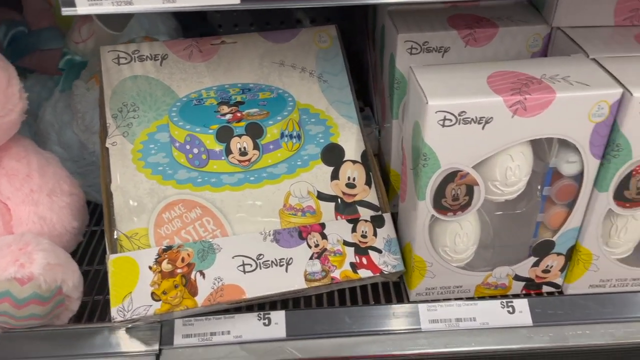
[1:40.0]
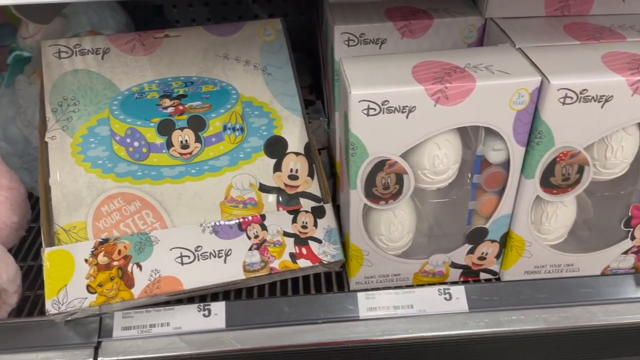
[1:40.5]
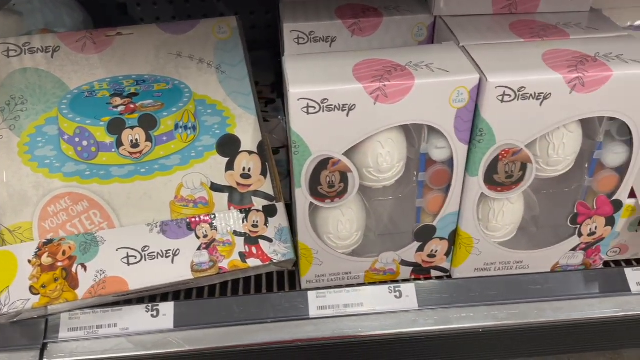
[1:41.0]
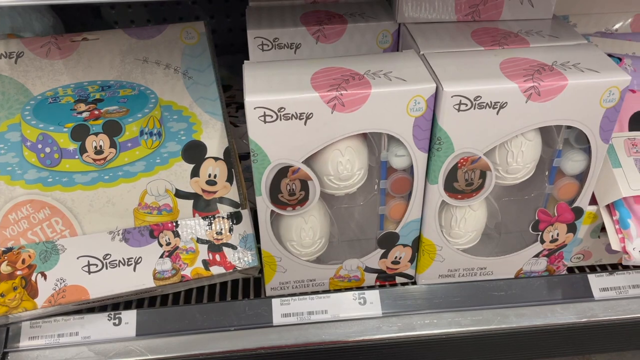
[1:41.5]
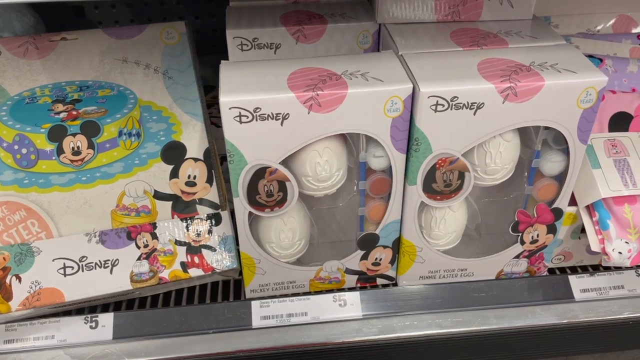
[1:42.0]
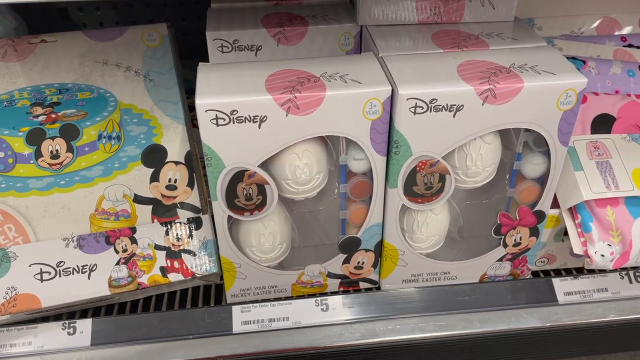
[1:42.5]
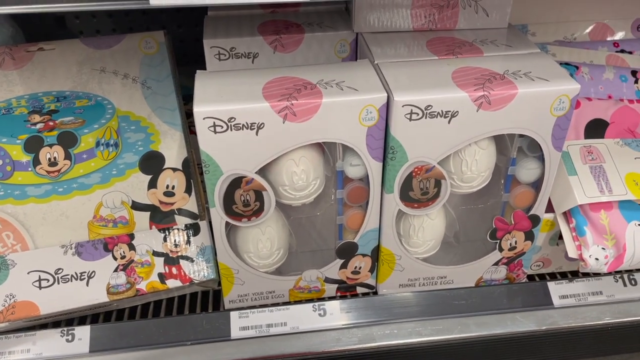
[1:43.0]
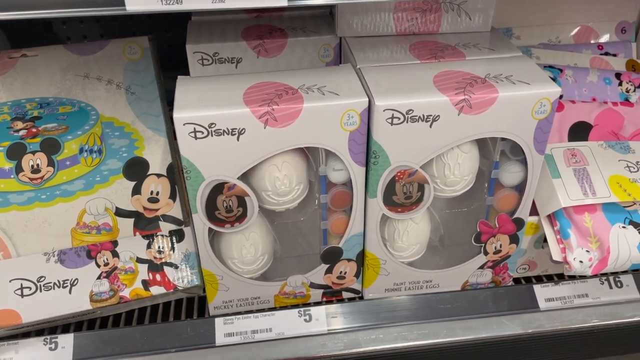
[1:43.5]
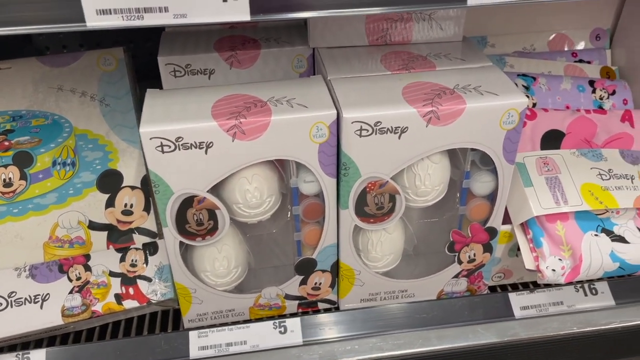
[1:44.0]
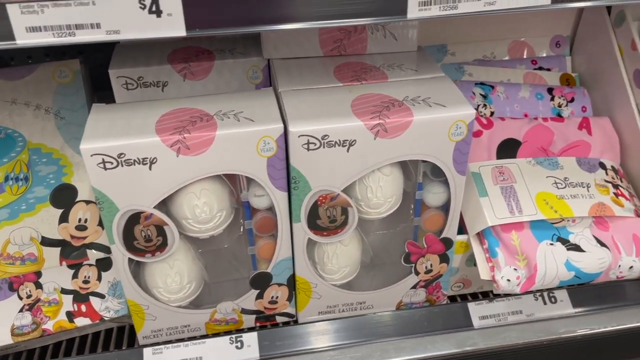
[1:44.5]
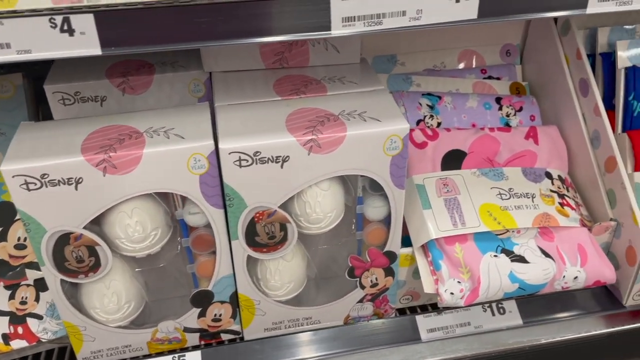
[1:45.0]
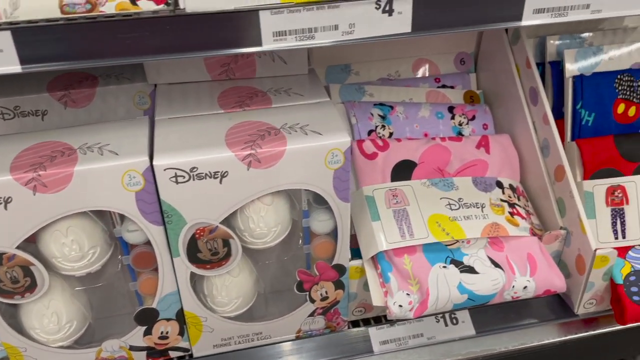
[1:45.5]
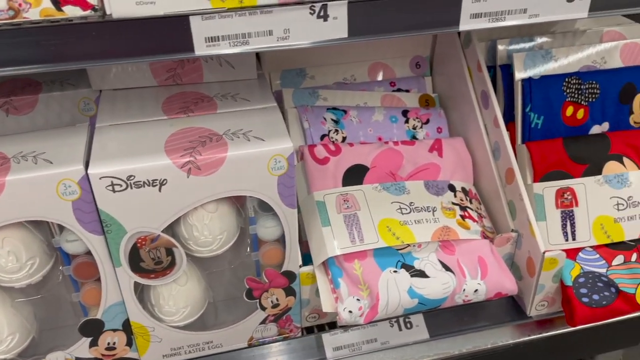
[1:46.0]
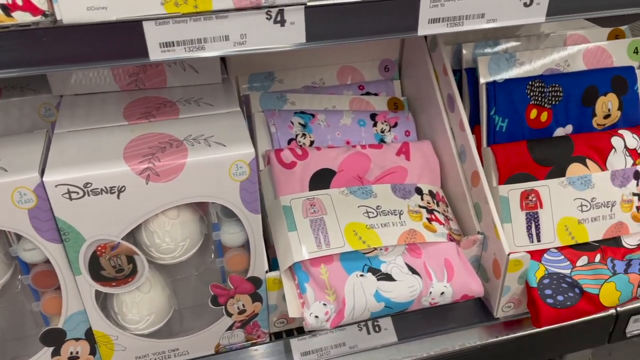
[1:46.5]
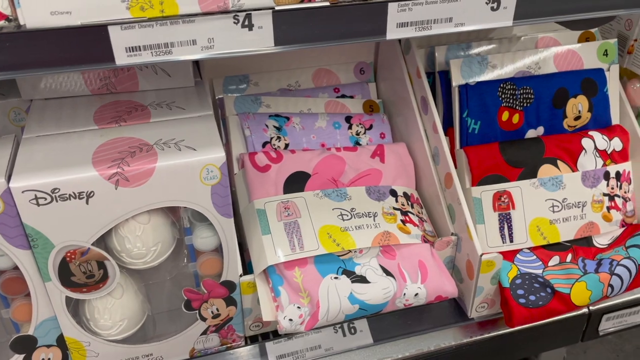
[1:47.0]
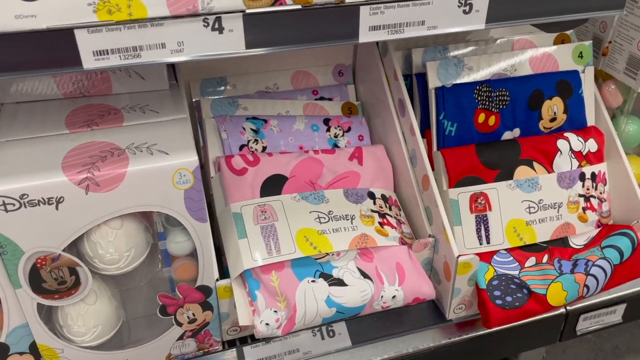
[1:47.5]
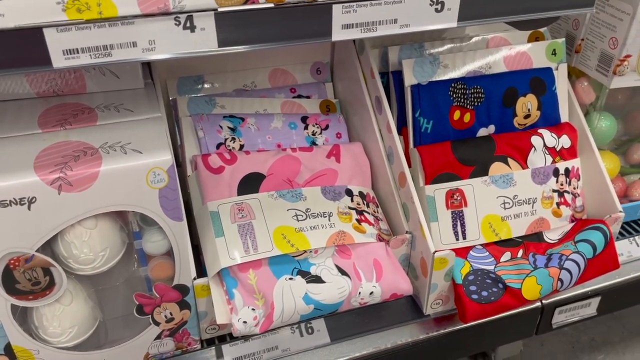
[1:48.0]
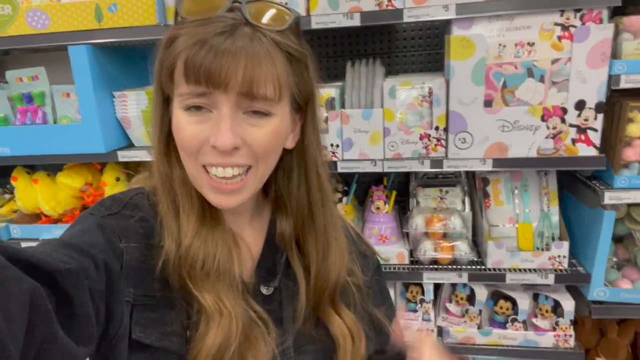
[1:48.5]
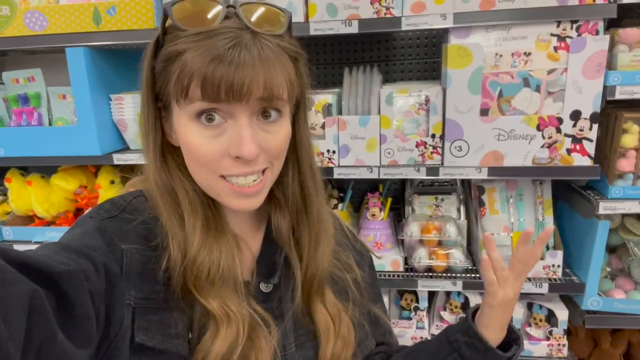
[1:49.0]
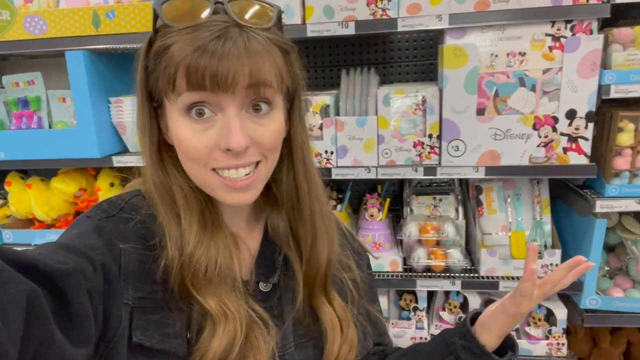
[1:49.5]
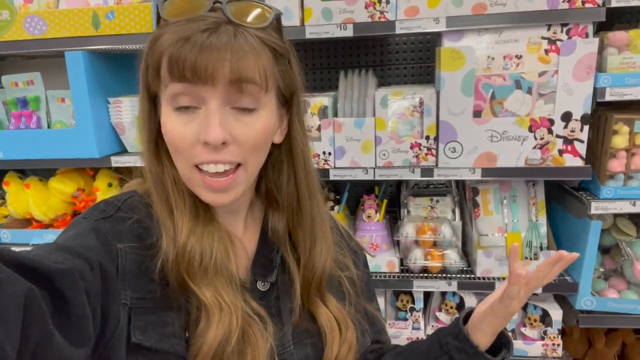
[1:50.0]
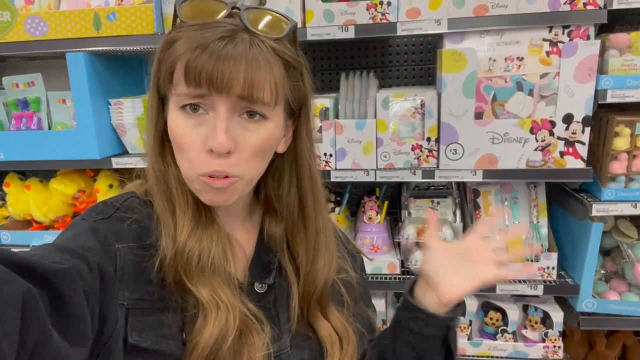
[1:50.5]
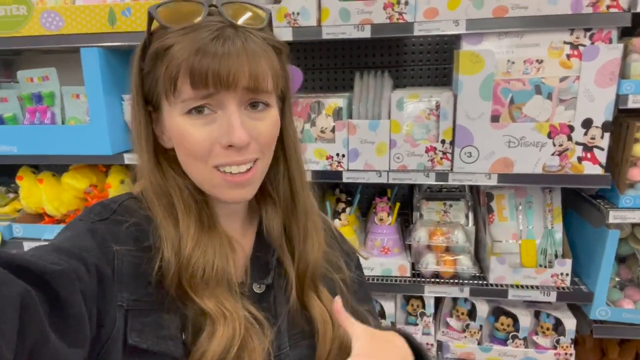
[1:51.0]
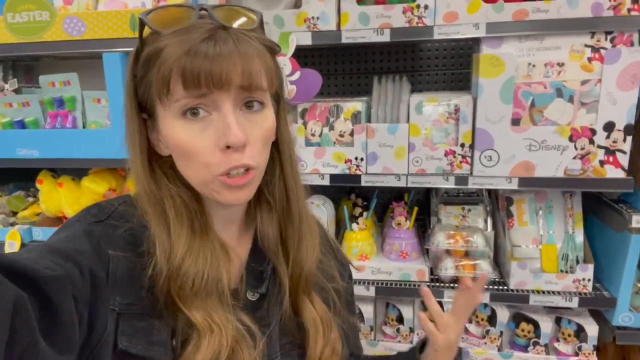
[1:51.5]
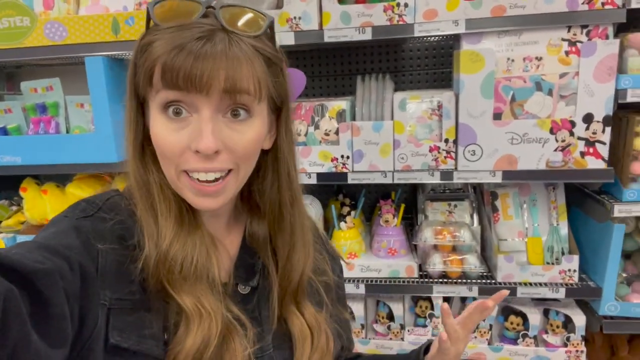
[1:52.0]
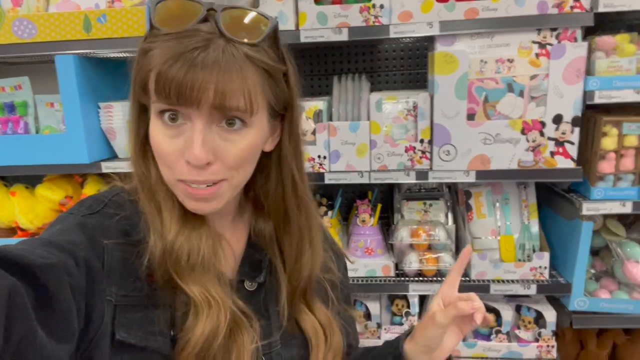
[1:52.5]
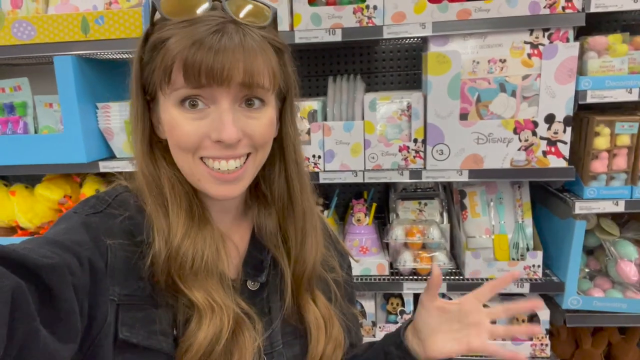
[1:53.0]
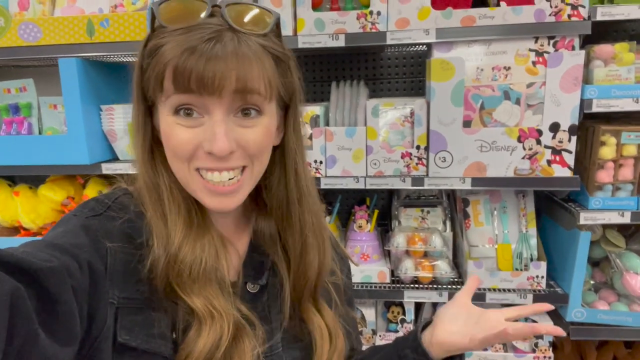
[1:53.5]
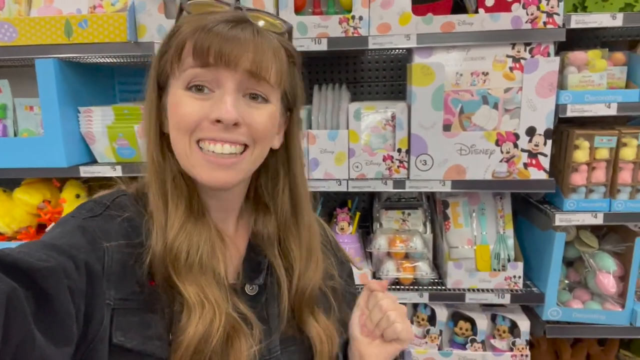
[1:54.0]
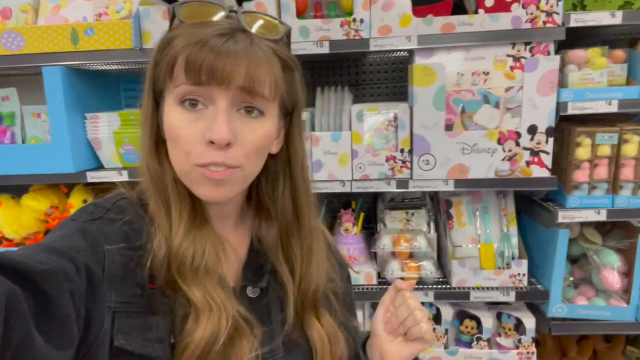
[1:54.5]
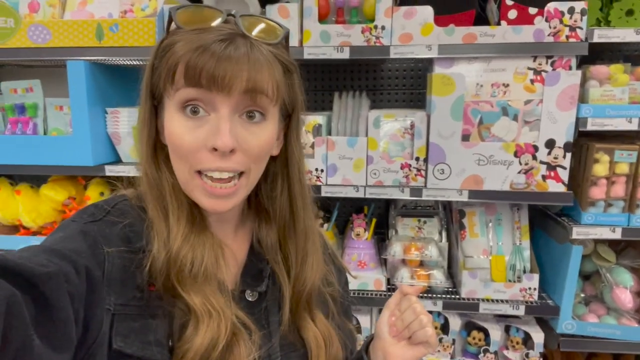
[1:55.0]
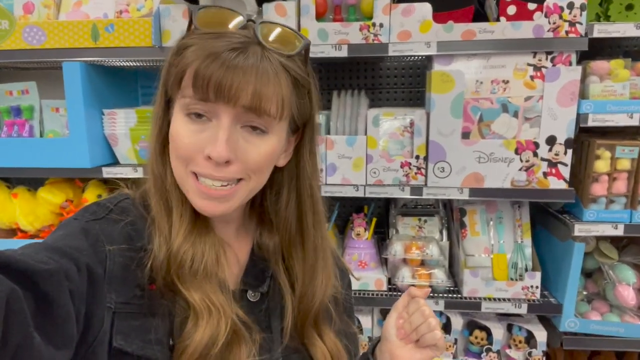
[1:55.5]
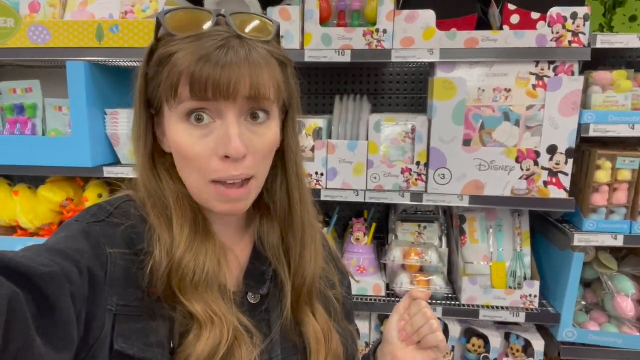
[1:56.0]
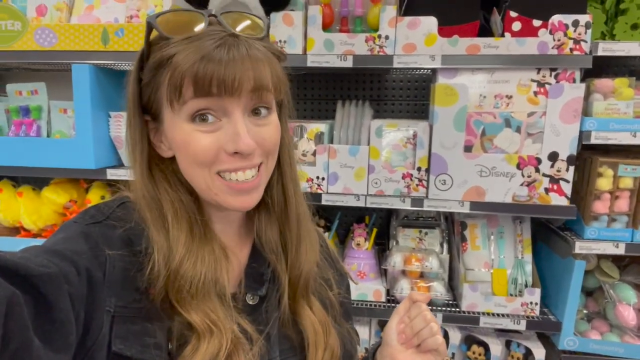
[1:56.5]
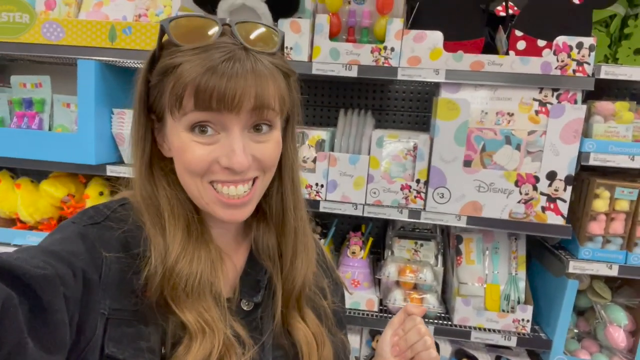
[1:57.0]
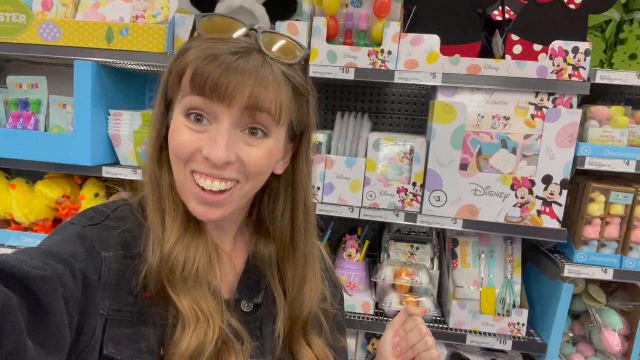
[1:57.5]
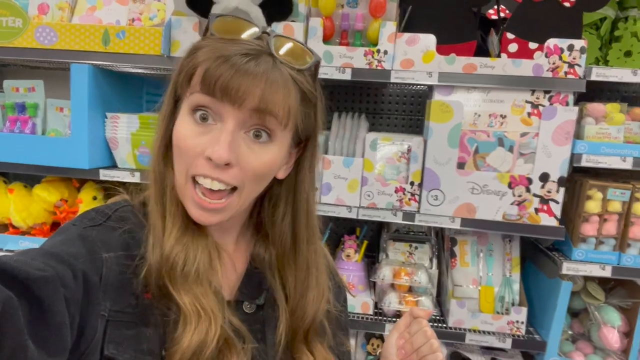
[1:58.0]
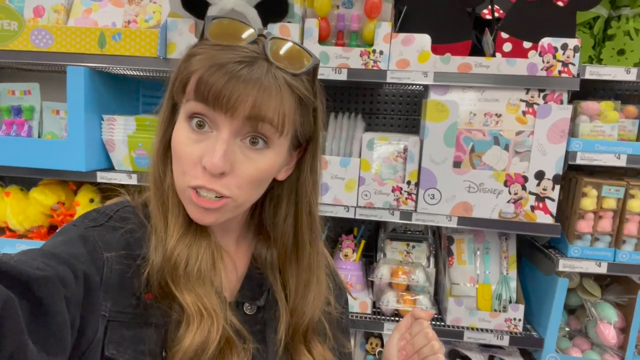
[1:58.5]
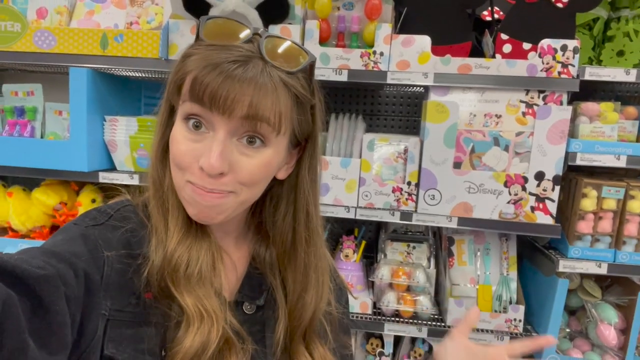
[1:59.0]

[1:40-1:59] More Disney Easter products are shown, including Mickey Mouse Easter eggs, as the camera pans to the right across a few more Disney Easter items, maybe including socks. The person then turns the camera around to show herself: a woman with glasses on her head, long brown hair, greenish brown eyes and a black shirt, Caucasian and probably aged 25 to 35. She talks into the camera for a few seconds in what seems to be an outro, with various Disney products and toys visible in the background, and then the video ends.